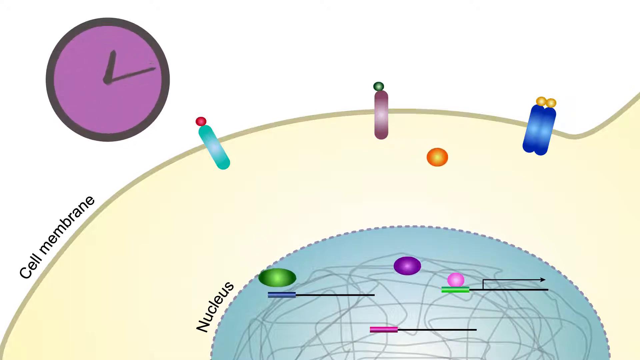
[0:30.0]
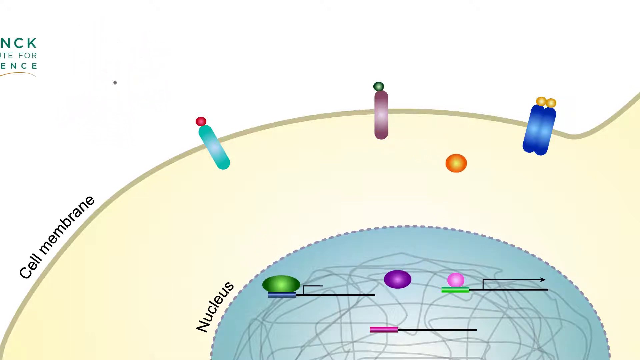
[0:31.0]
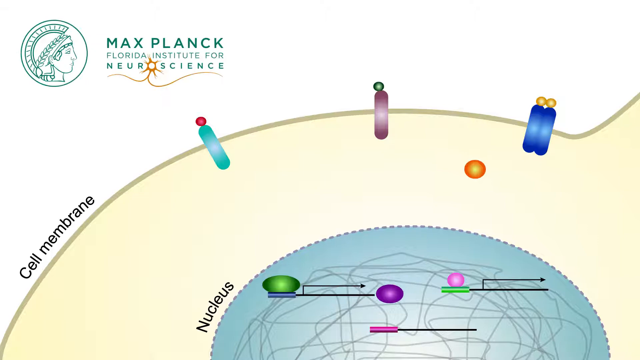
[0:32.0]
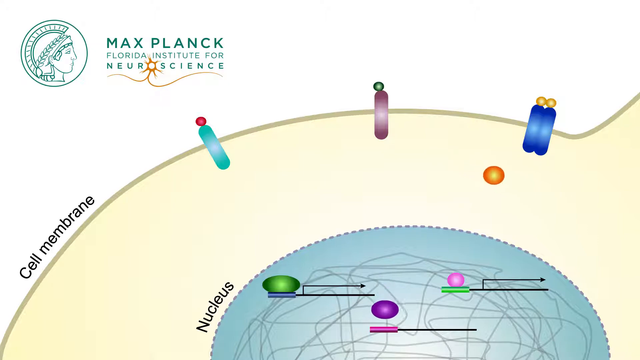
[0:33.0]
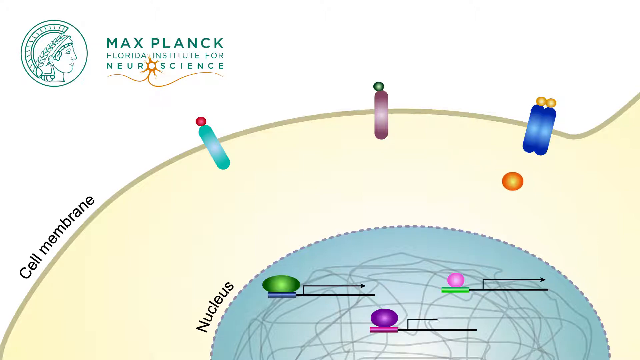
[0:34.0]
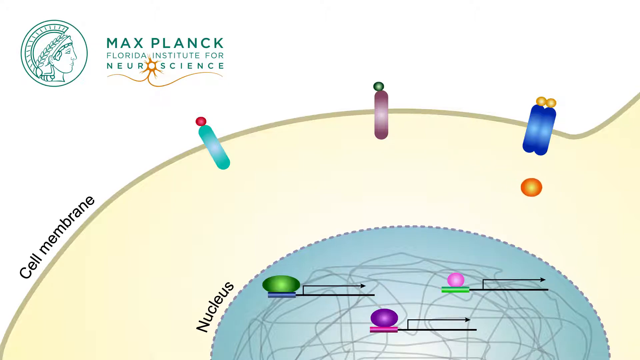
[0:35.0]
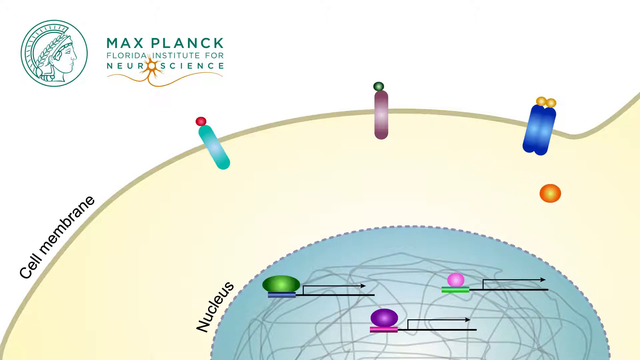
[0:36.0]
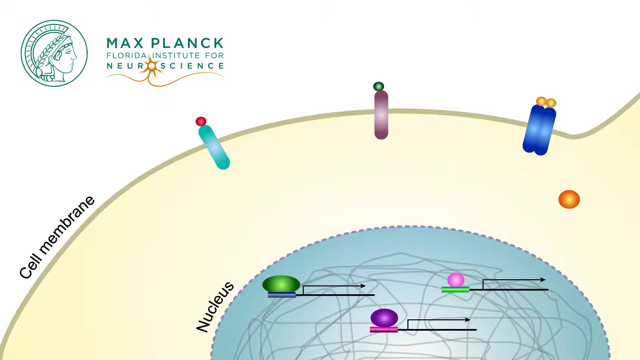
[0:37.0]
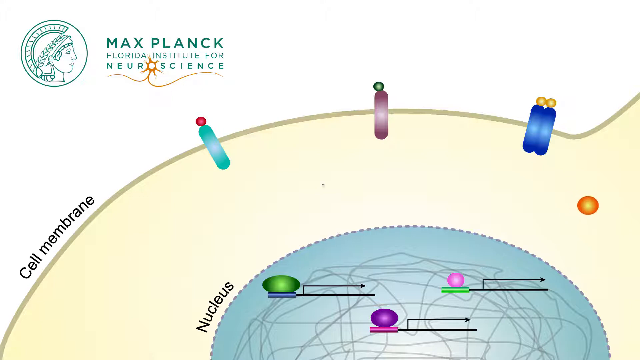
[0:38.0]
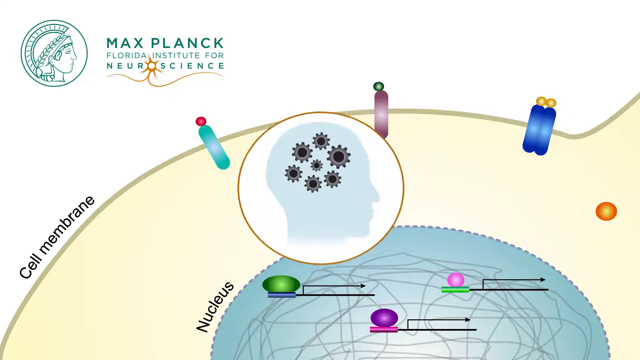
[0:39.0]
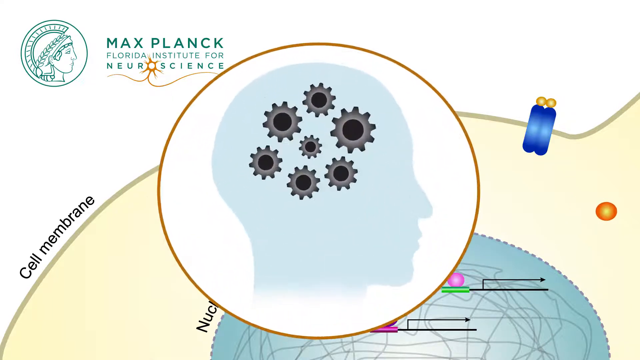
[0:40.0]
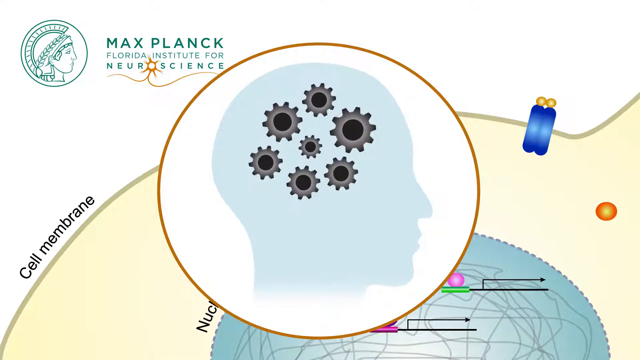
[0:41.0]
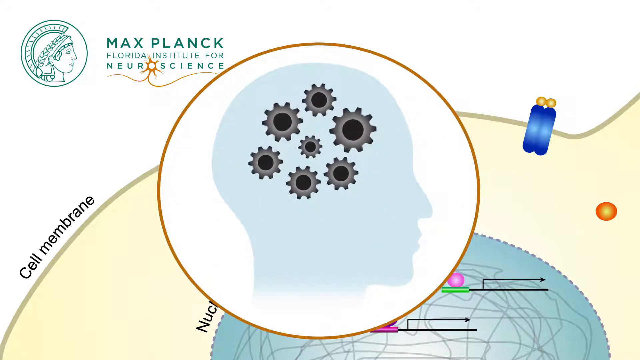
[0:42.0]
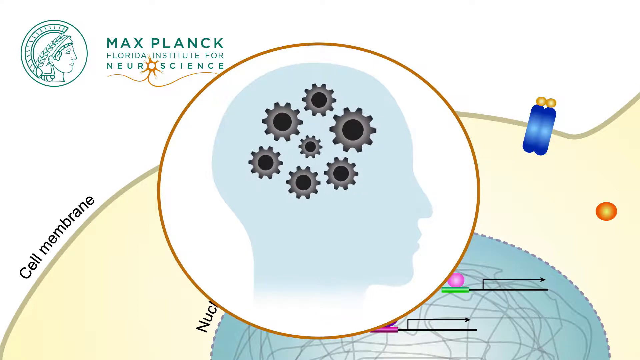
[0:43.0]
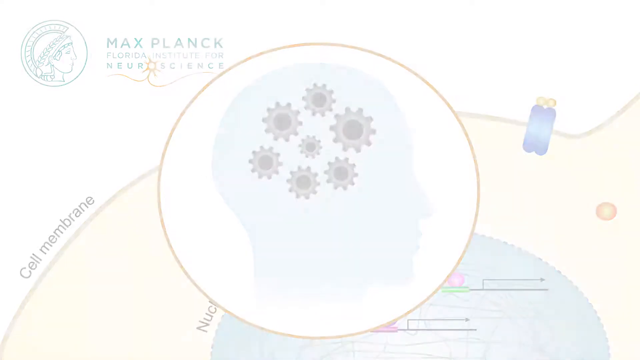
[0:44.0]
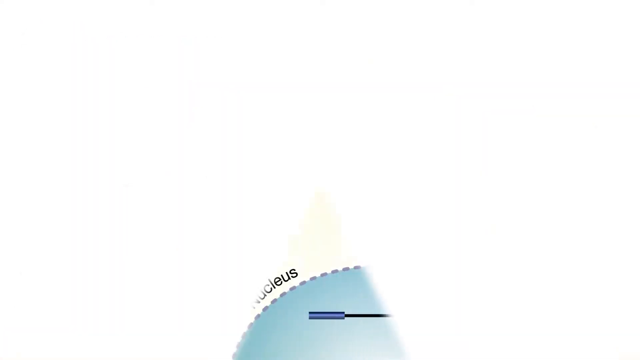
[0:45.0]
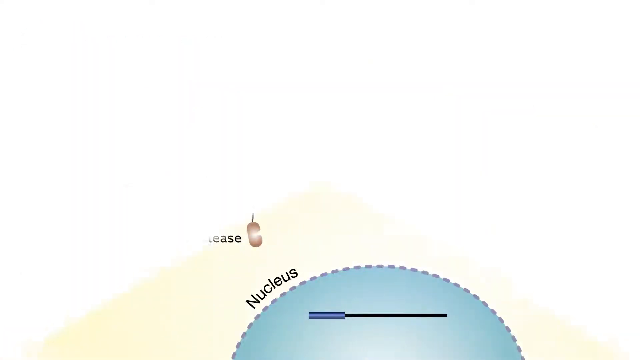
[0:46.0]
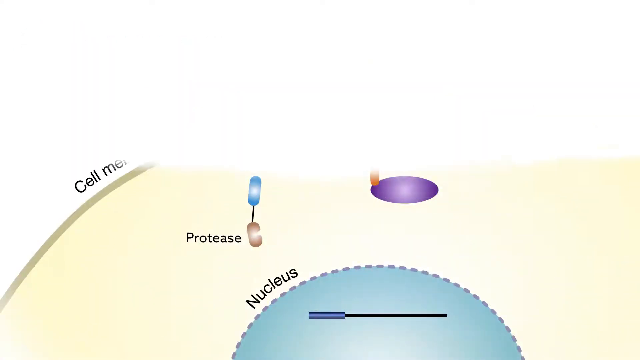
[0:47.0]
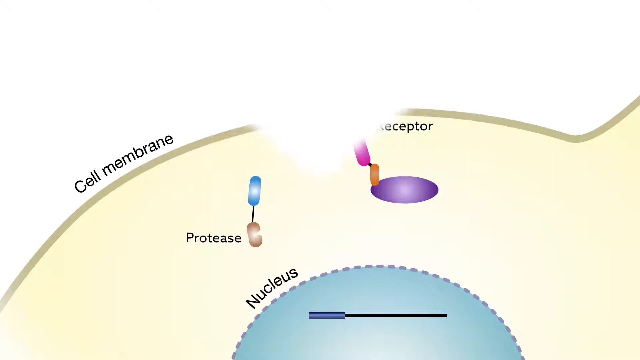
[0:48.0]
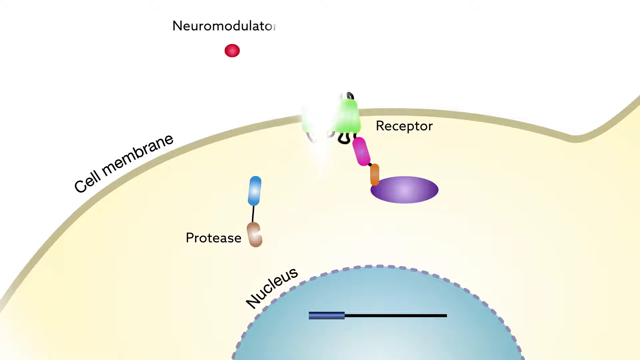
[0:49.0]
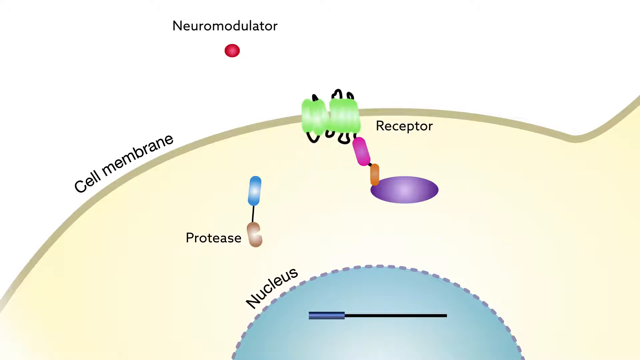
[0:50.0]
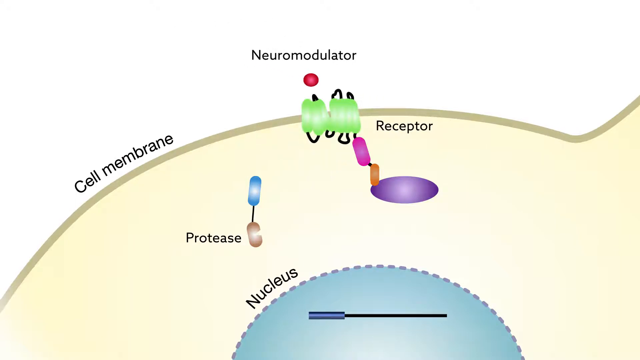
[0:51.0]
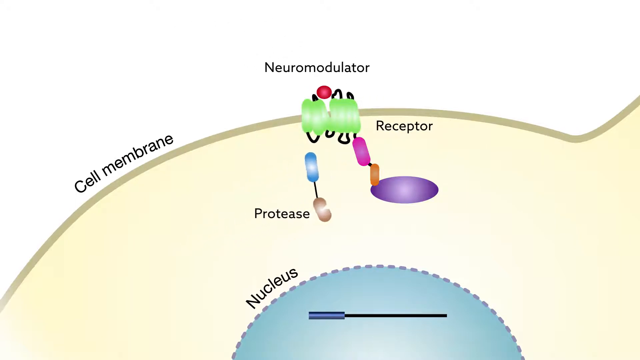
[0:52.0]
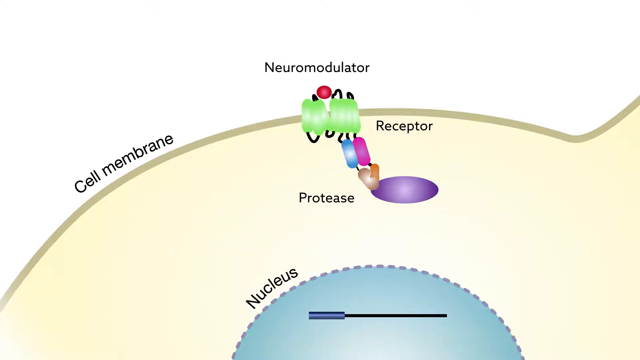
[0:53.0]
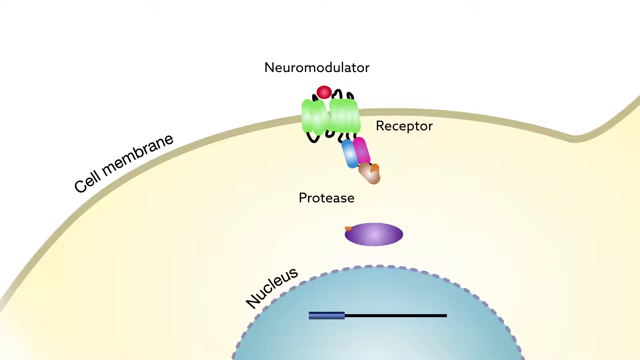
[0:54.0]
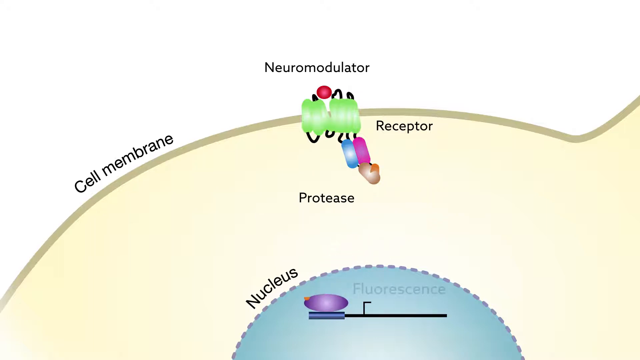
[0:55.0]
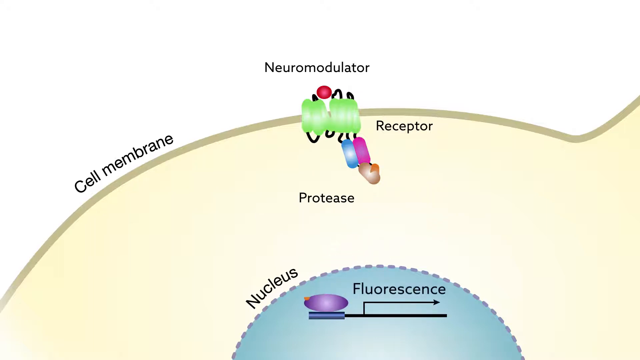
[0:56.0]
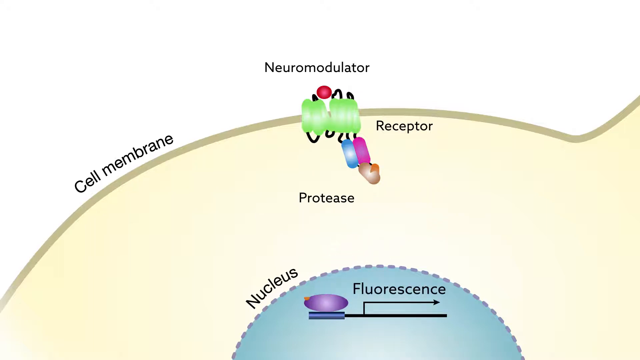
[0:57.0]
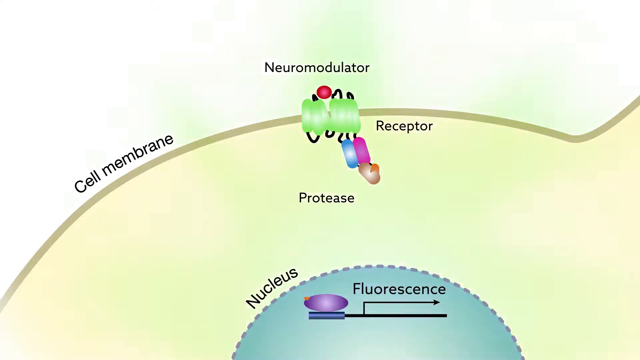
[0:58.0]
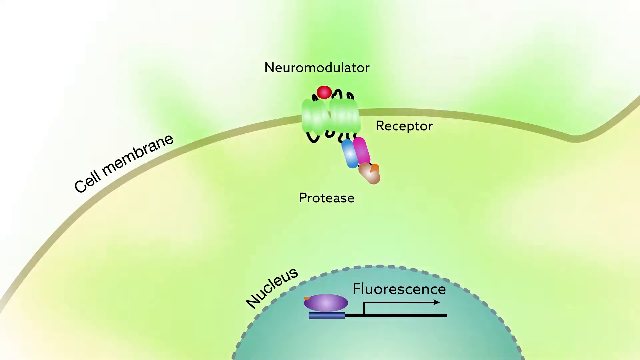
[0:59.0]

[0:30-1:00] The same animation of neuromodulators continues, moving closer and deeper into places like the nucleus and around the cell membrane. In the nucleus there are different scales, and two of the orbs seem to land on two of those scales. An orange orb moves off to the right in the cell membrane. Afterwards, a big animated picture of the side of the person's brain shows gears turning, showing certain parts of his brain working. The video then moves to another animation in which a neuromodulator, a protease and a fluorescence move around.